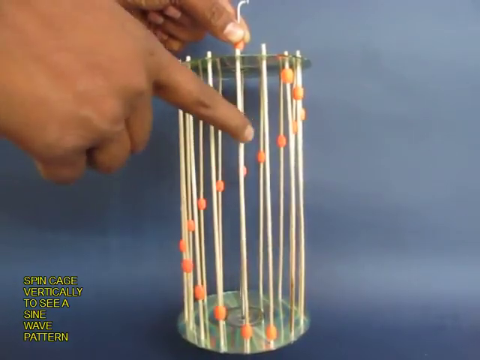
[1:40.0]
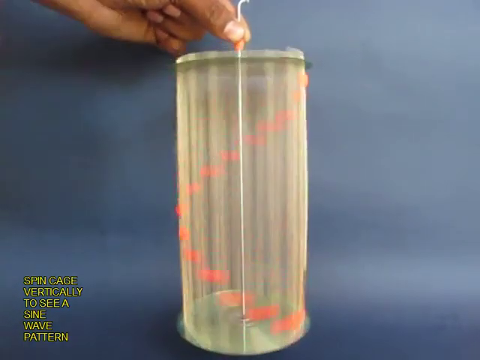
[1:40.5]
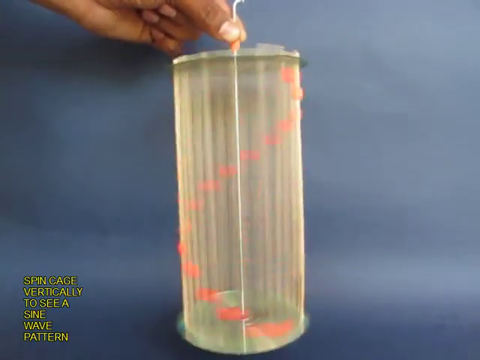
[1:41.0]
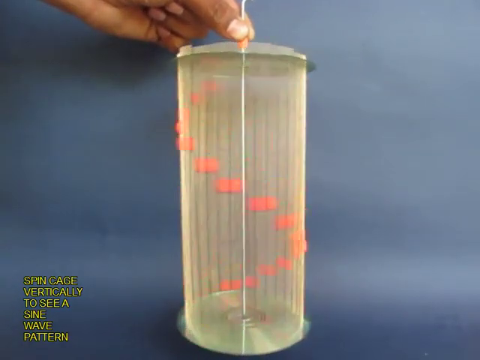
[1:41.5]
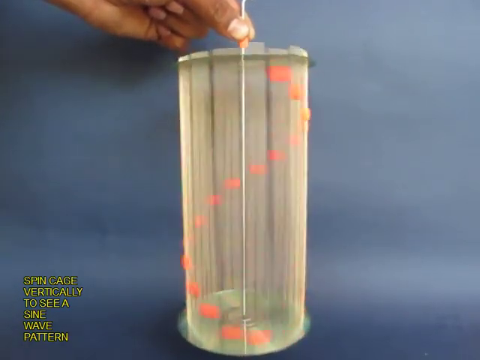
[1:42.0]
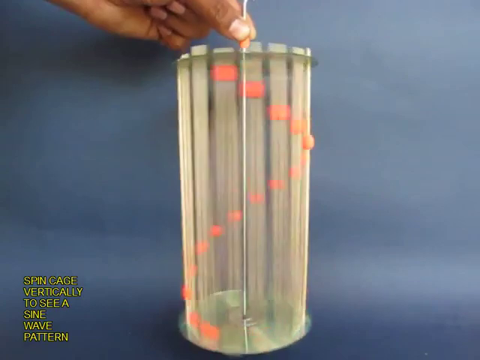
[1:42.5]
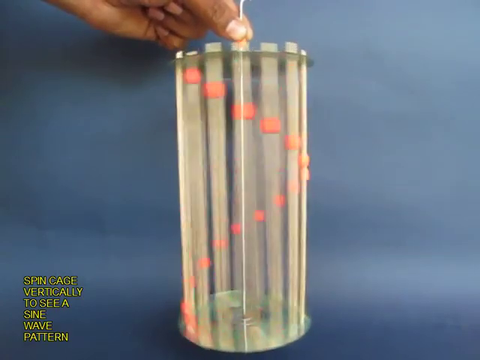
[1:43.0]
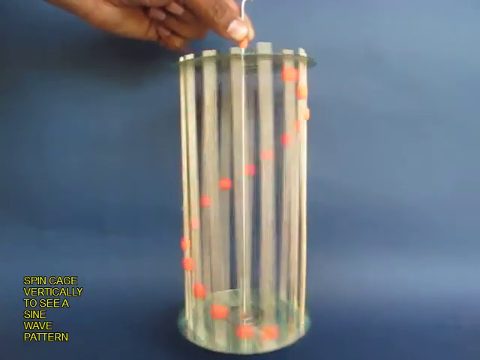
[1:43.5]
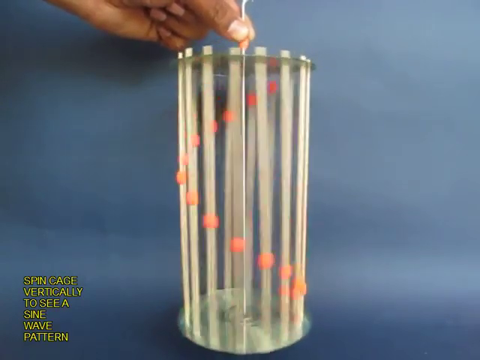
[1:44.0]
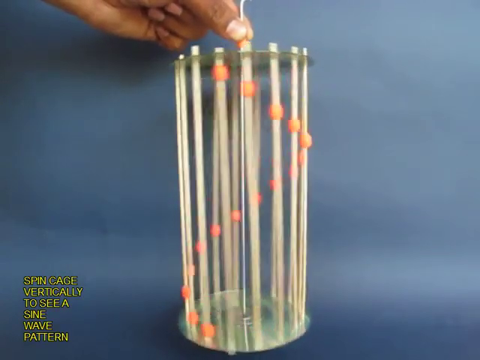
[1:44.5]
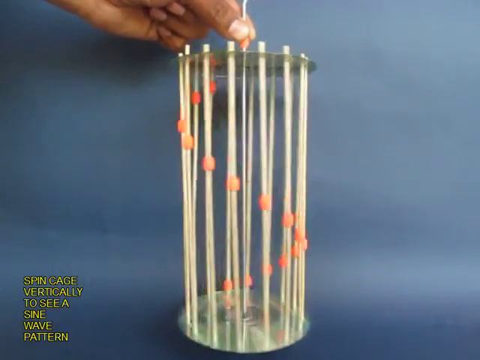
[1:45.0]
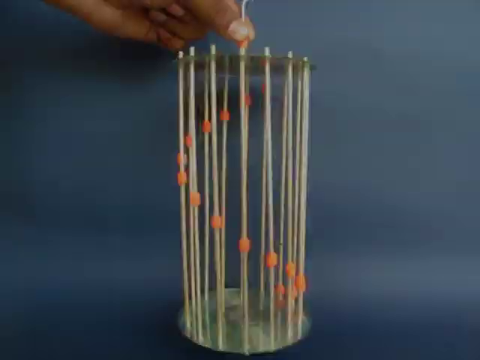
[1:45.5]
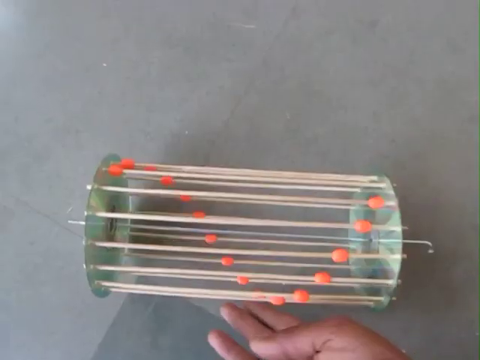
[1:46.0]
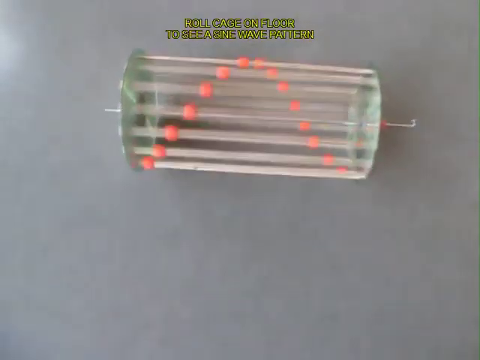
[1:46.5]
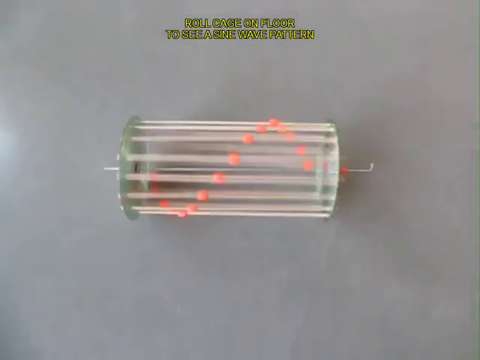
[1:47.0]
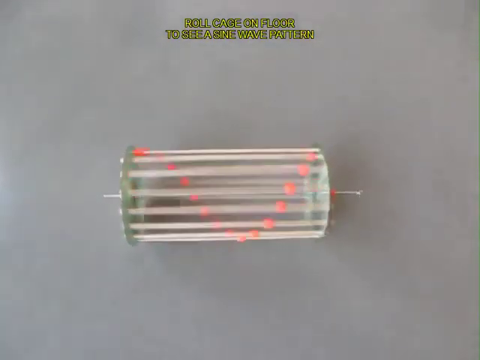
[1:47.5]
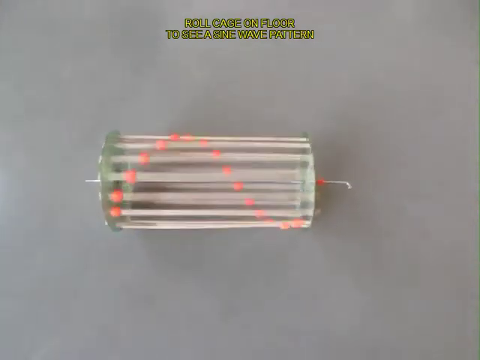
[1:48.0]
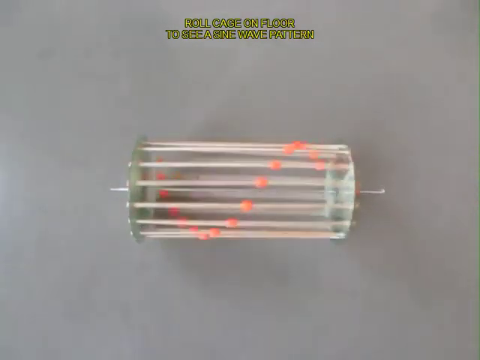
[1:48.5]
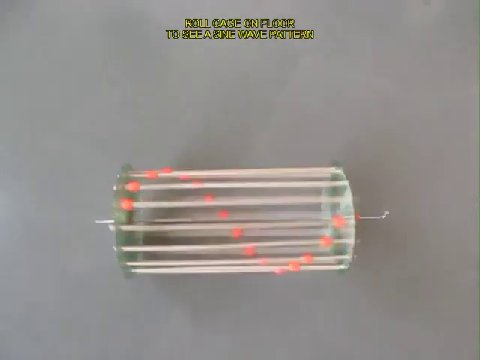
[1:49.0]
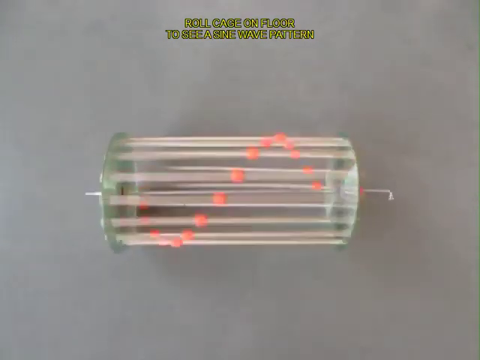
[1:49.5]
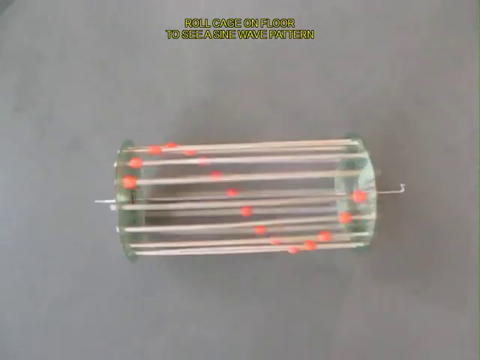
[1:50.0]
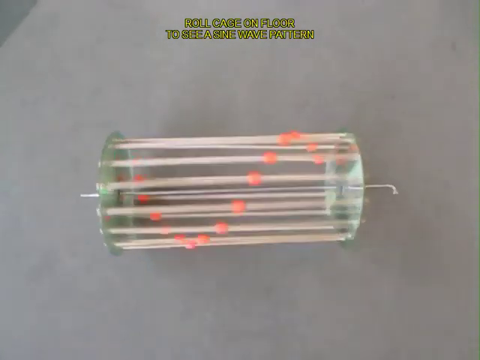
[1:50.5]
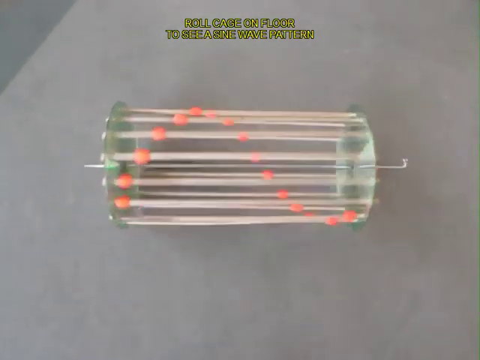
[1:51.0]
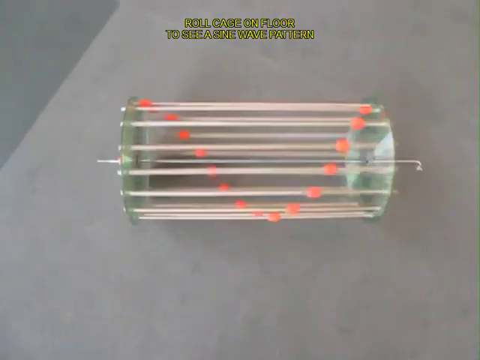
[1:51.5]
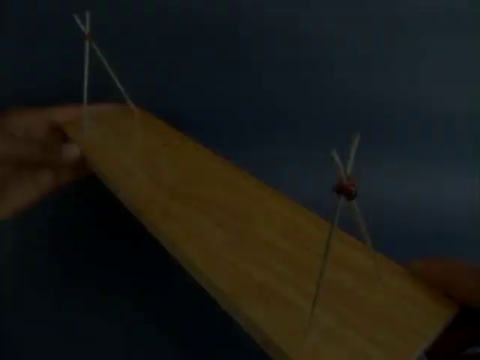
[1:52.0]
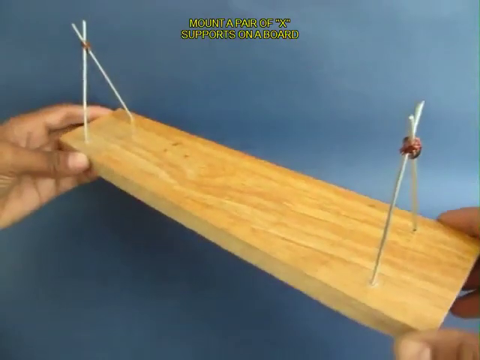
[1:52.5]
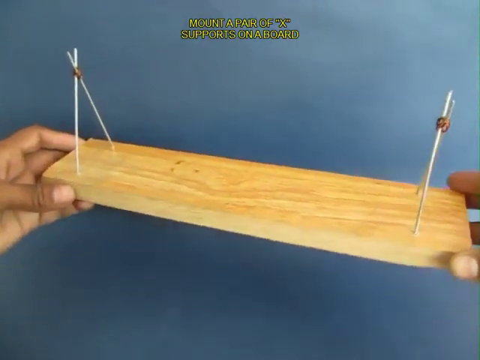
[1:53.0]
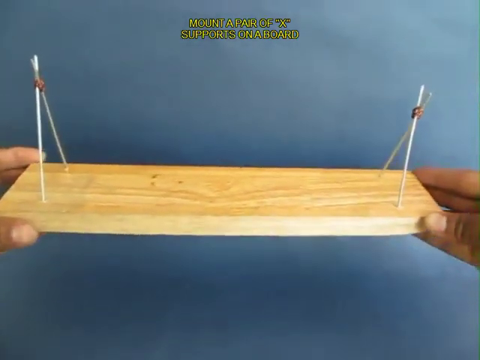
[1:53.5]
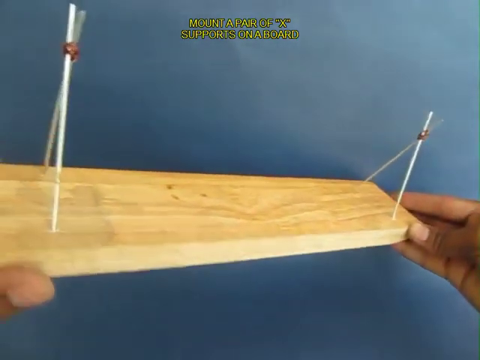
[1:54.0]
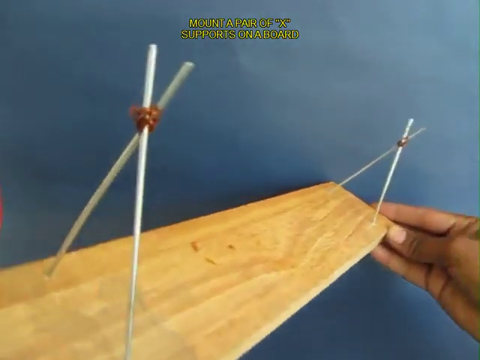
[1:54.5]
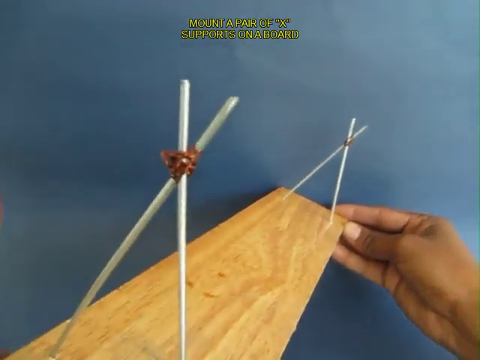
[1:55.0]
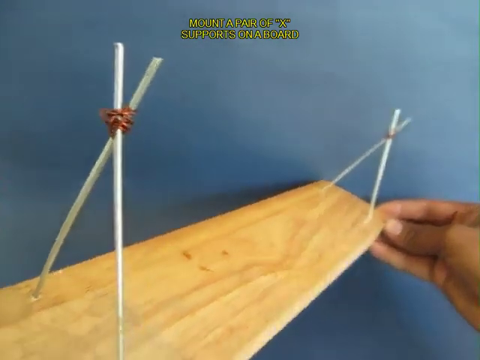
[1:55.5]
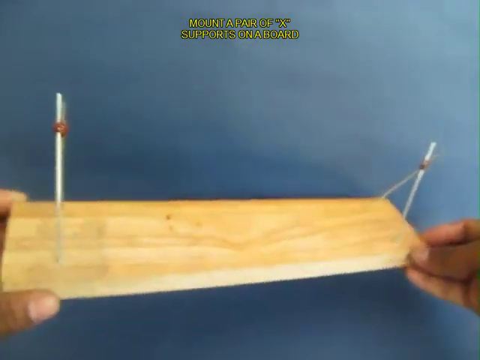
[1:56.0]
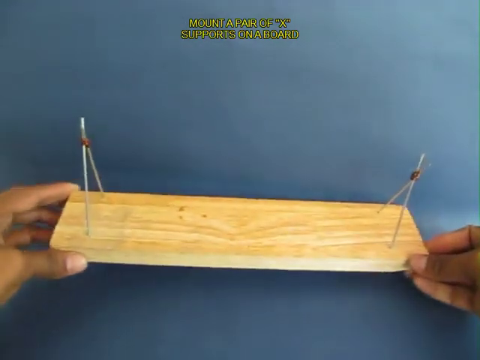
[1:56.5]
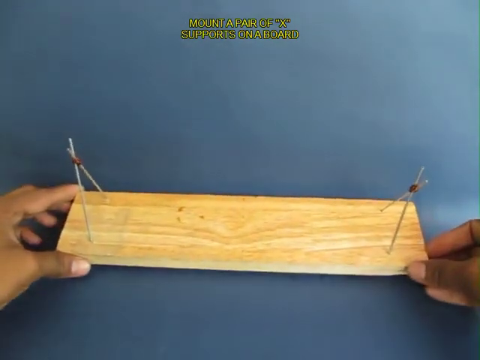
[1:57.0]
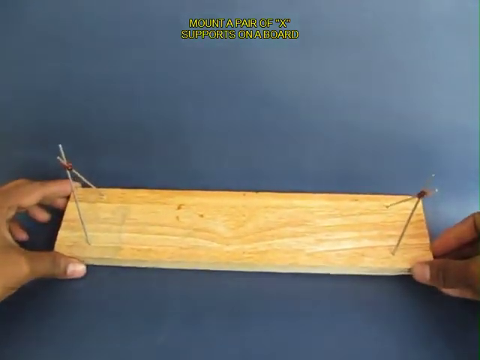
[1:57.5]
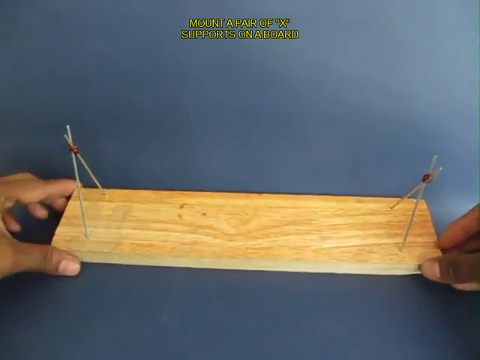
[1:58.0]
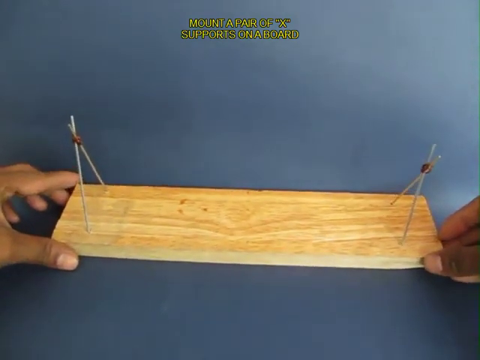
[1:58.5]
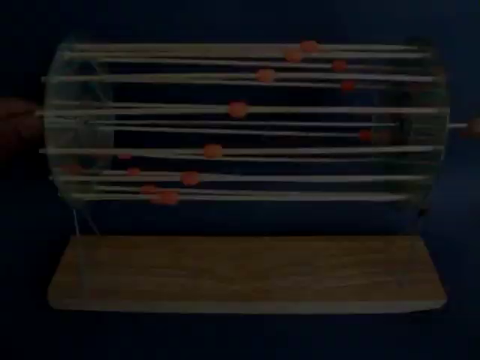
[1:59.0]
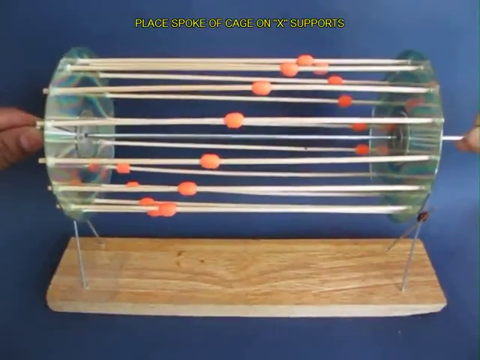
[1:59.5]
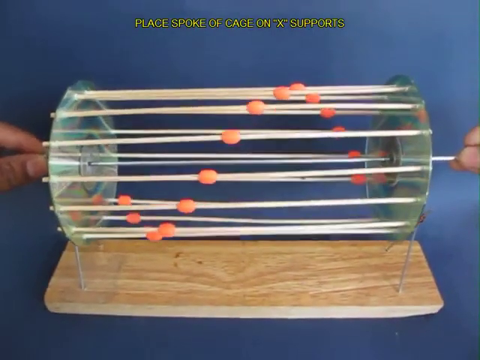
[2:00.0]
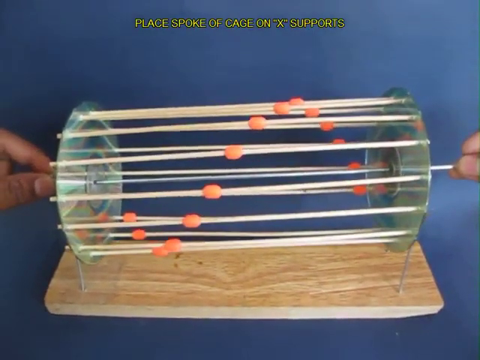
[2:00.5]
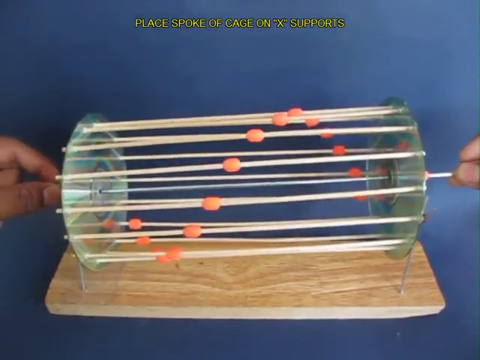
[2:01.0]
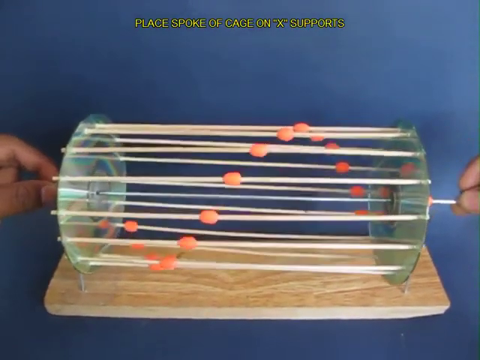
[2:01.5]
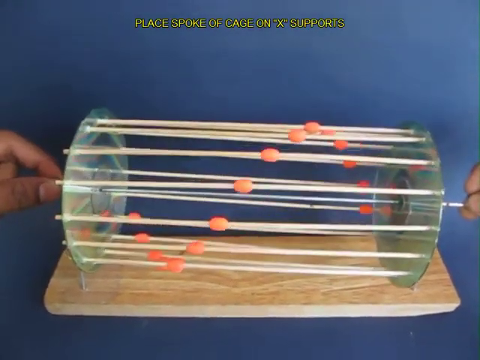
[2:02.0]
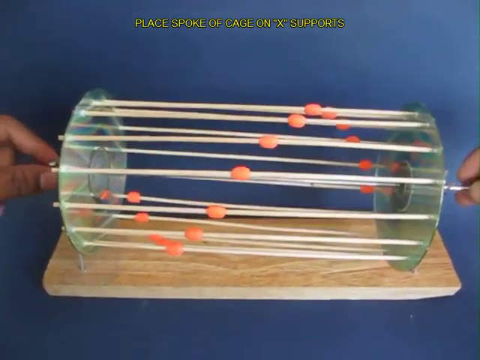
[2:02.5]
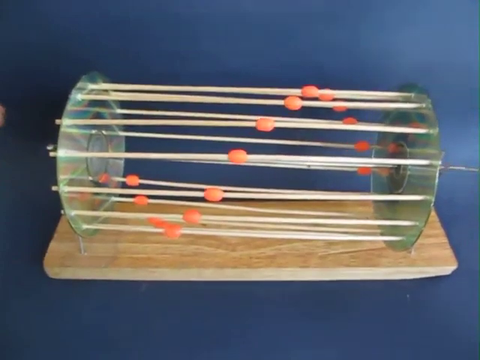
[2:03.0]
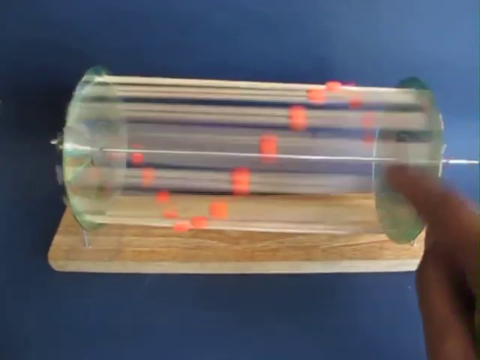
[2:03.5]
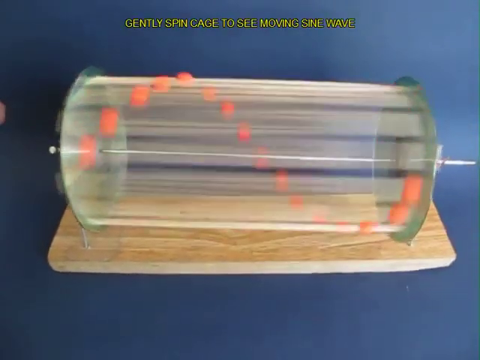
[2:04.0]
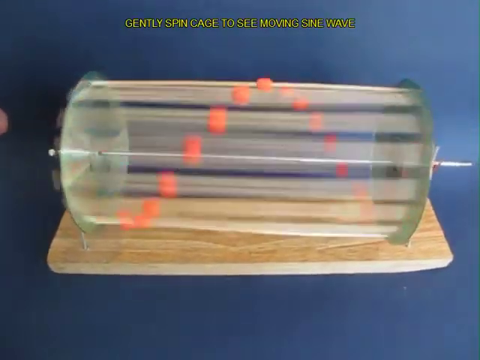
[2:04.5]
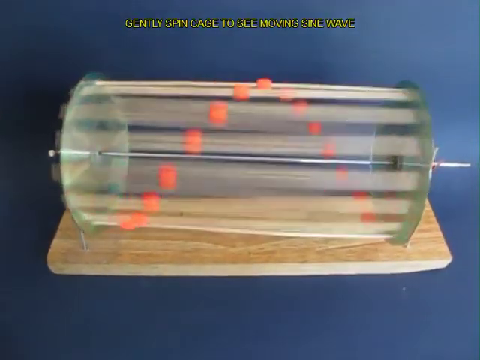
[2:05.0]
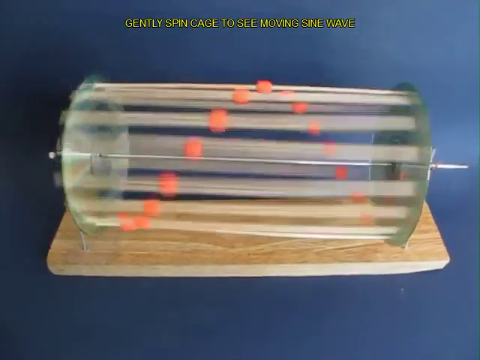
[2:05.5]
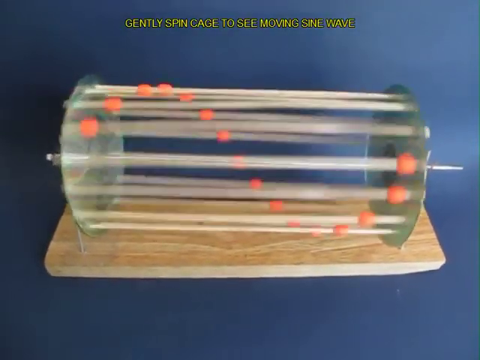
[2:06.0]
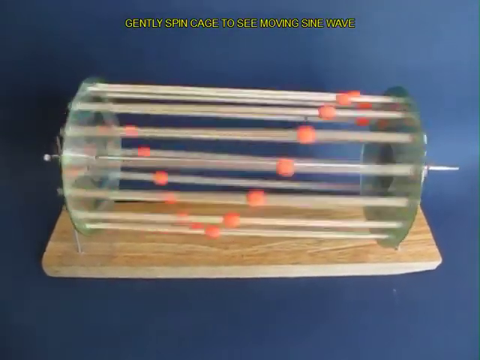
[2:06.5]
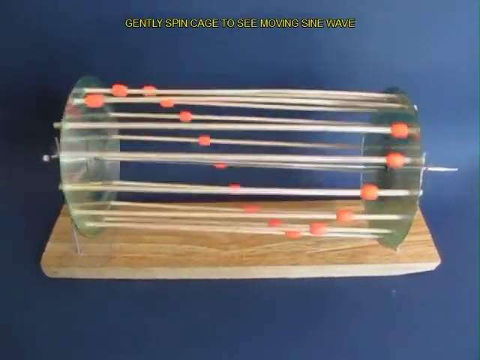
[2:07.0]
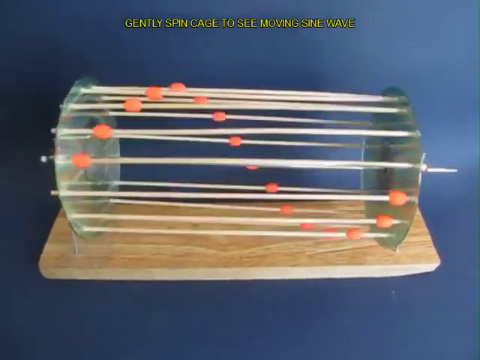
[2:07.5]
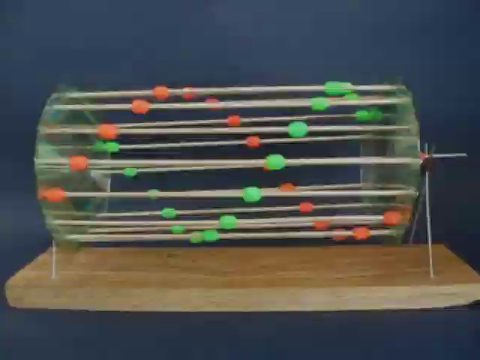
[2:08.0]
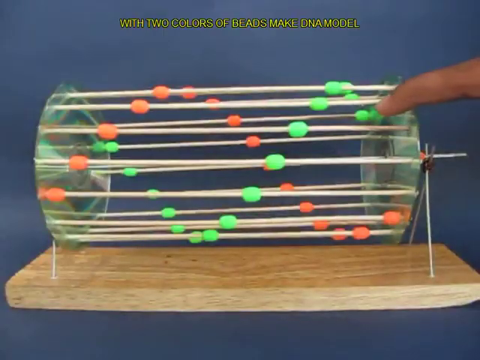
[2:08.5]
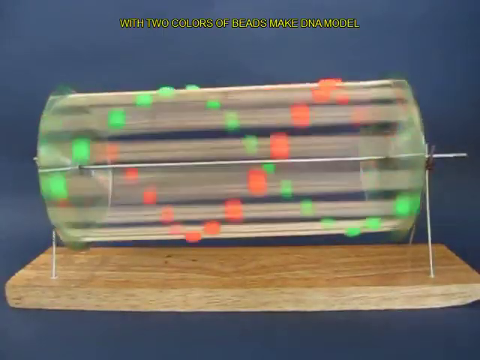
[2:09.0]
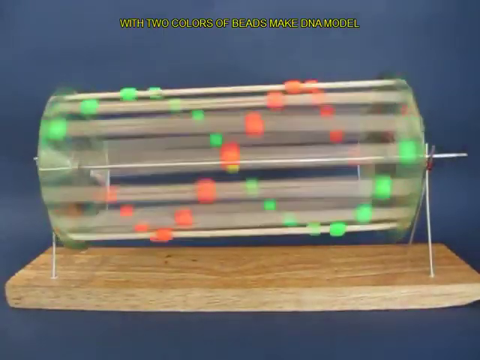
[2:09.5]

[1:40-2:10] On the navy blue background is the finished dynamic wave model, with orange beads on its skewers, and the teacher holds its metal rod. He spins it, and it goes around and around, creating a wave. In a different scene, he places the wave model on a gray background and rolls it, and wave patterns oscillate through the beads. The rod rotates as the inside spins, and the orange beads keep oscillating, creating the illusion of a wave. The teacher then holds up a wooden board with some sticks in it in the form of an X. He puts up the board, places it on a wall, and uses the rod to place the model within the X on the wooden structure. It is spun again, creating a wave-like pattern.